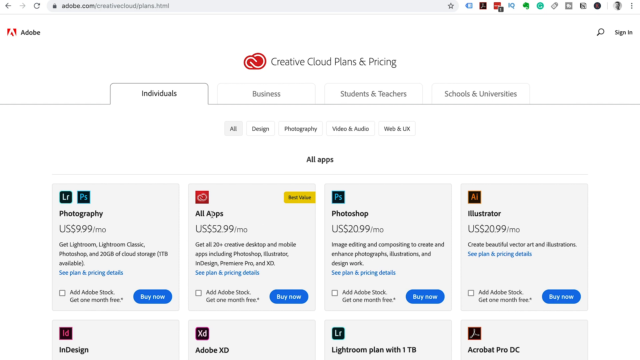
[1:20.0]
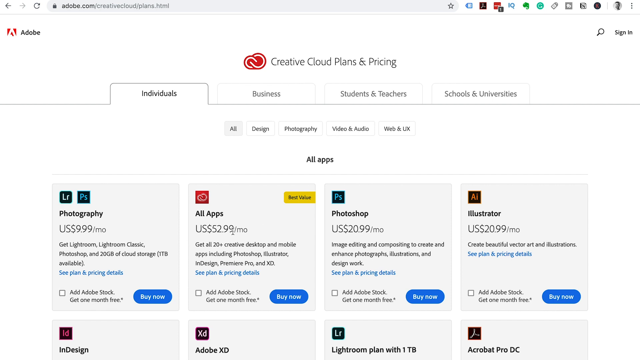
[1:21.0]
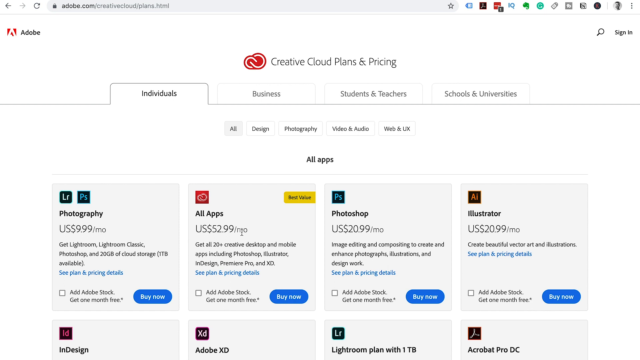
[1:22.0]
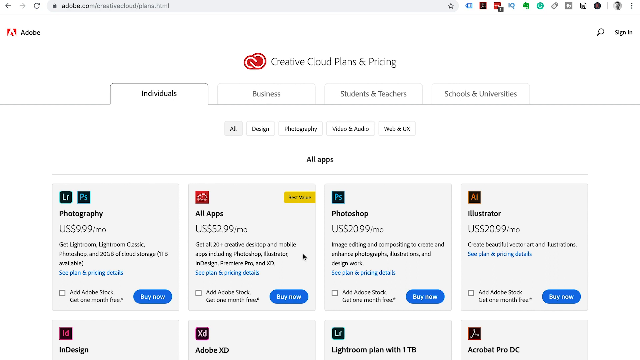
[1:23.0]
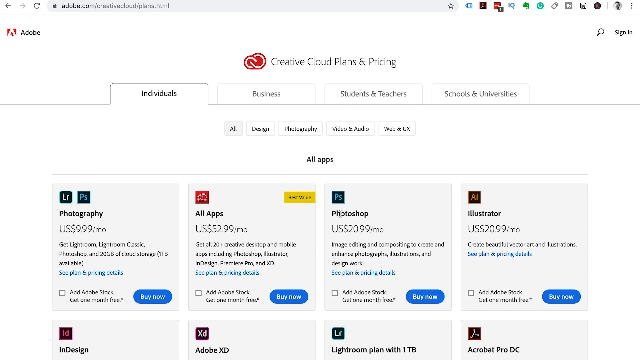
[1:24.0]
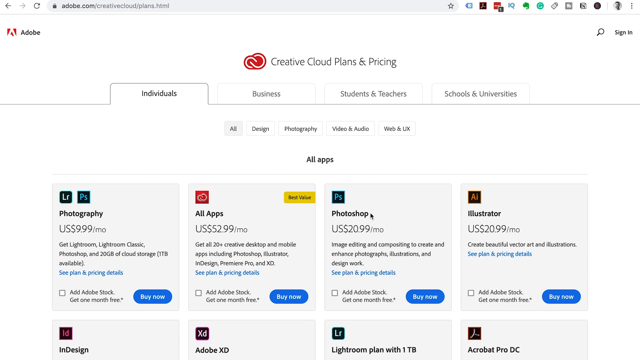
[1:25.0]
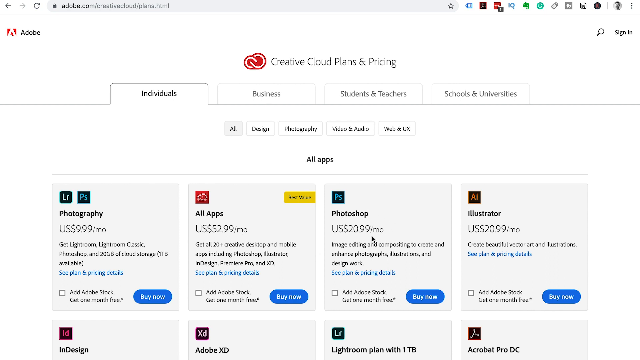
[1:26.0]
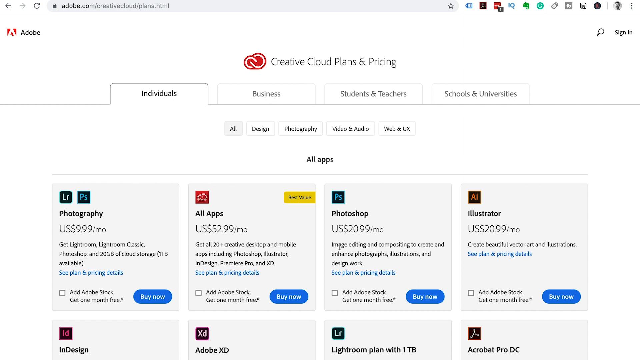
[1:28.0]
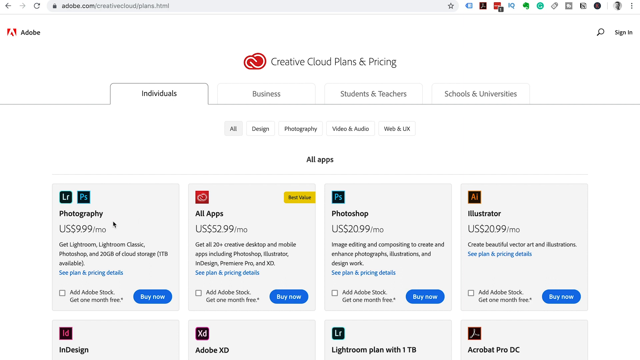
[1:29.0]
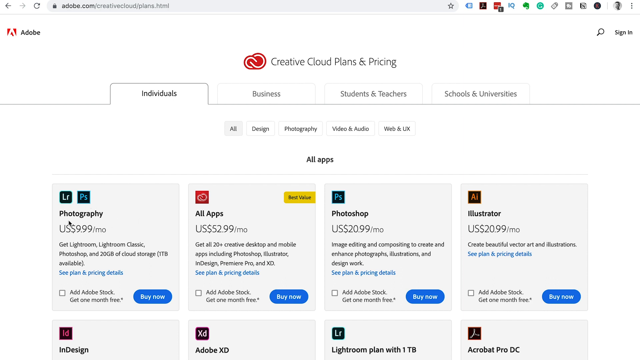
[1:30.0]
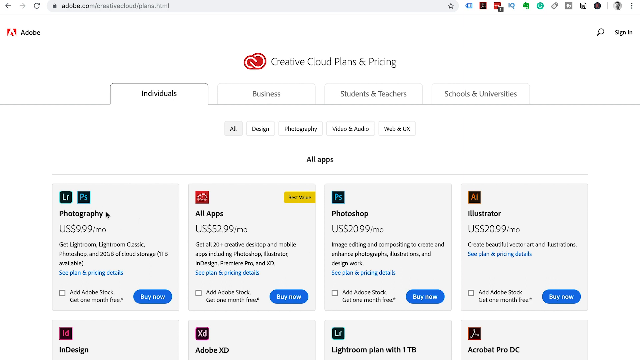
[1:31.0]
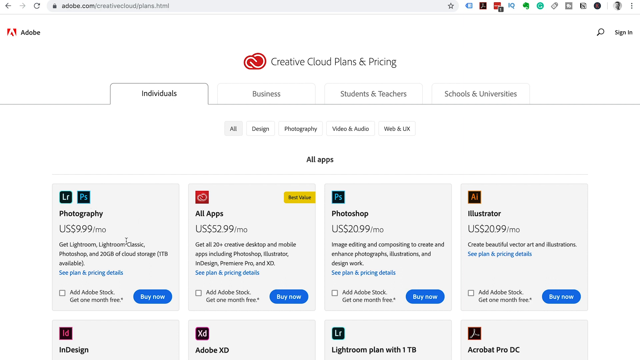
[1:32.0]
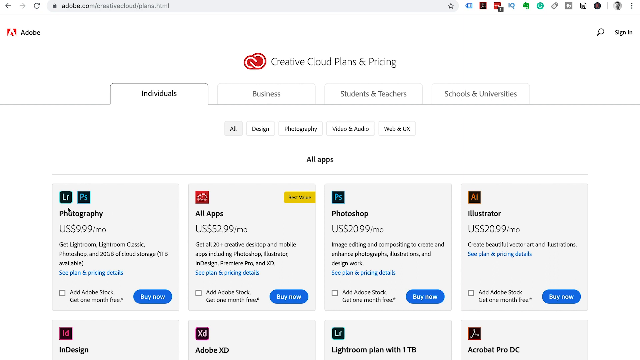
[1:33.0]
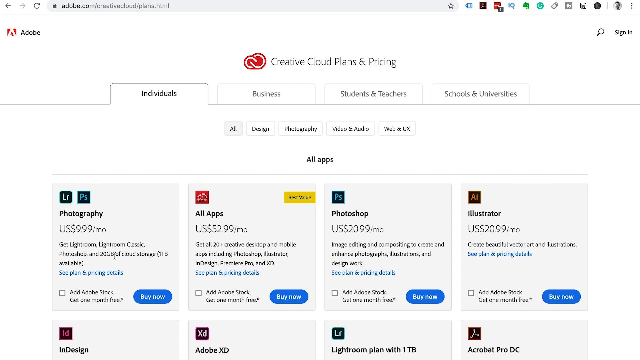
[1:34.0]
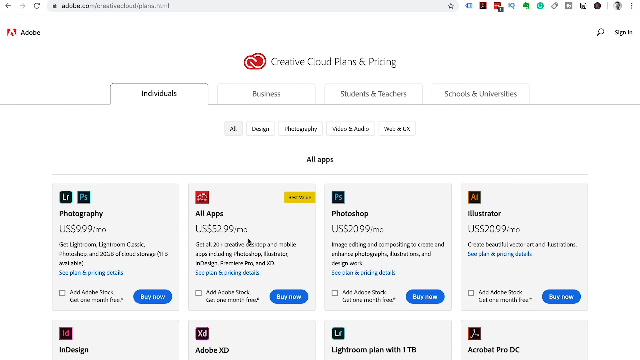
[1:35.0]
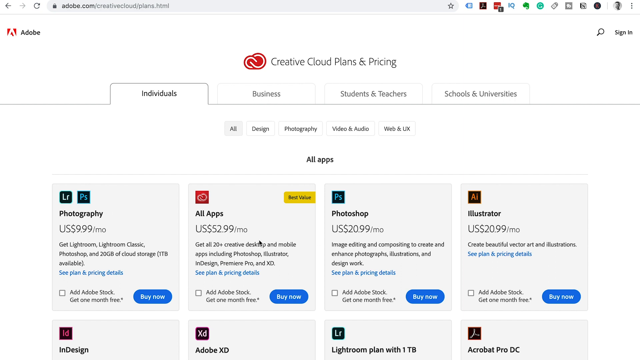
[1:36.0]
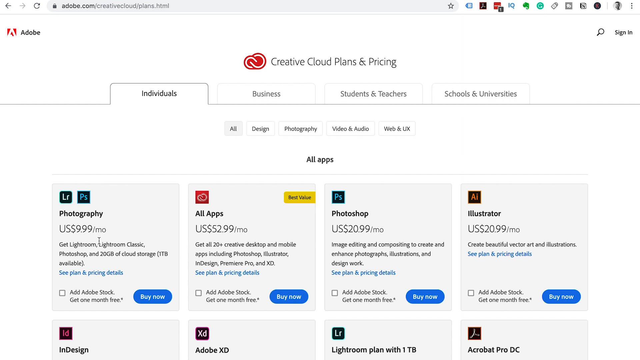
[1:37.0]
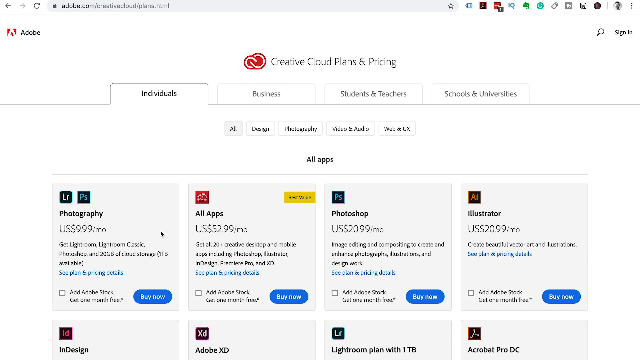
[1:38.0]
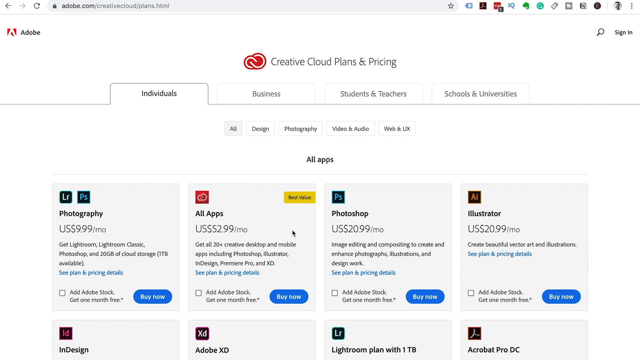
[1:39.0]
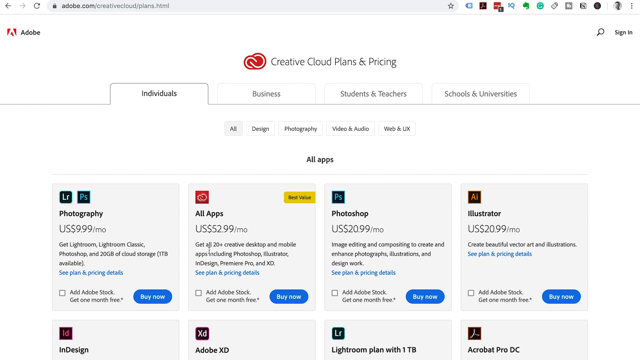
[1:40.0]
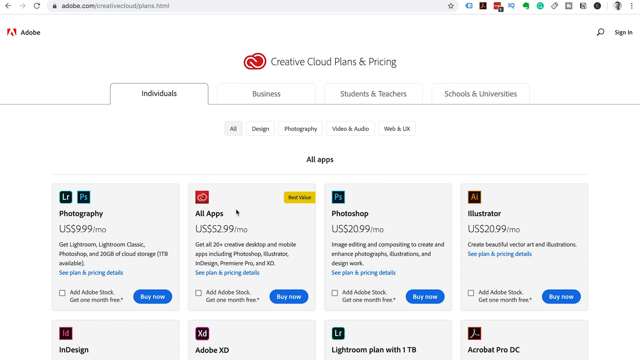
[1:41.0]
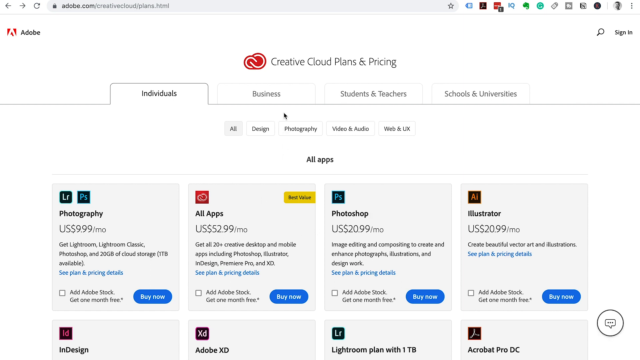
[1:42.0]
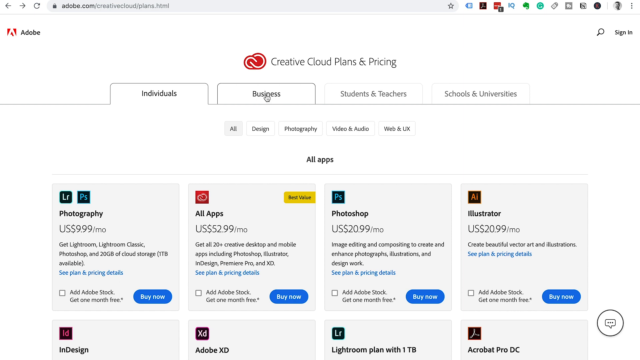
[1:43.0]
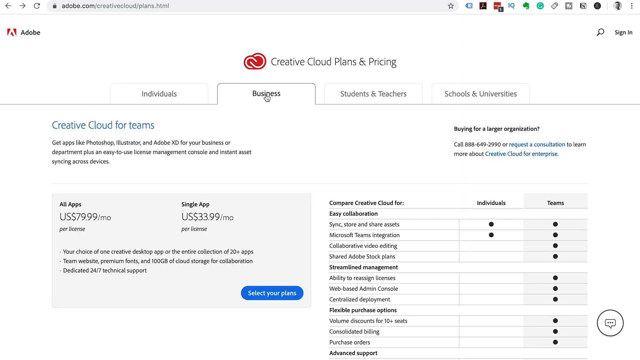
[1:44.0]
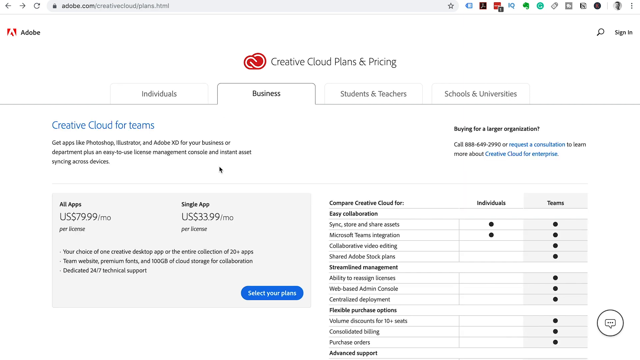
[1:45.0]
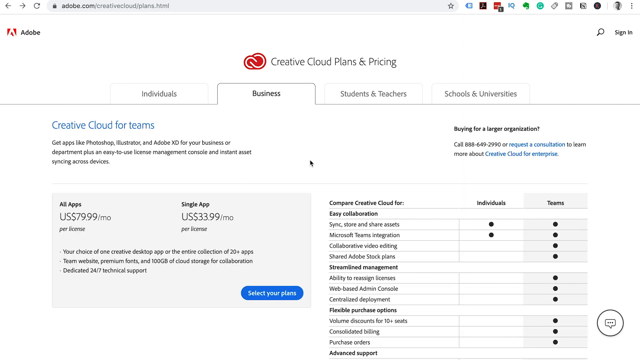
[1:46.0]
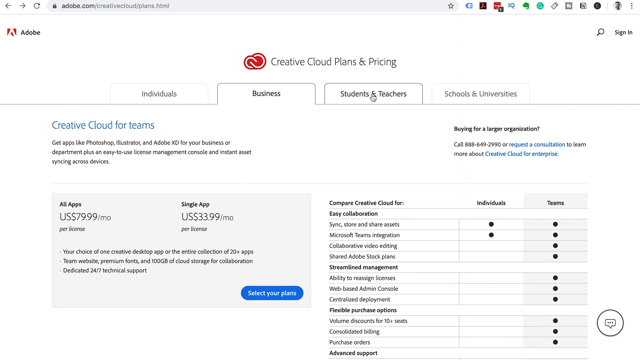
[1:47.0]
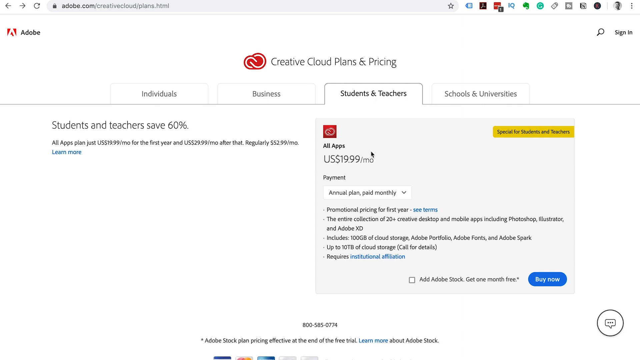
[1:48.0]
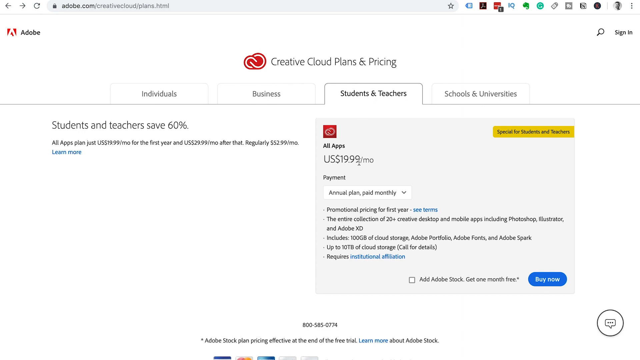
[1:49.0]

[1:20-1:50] They move on to the Photoshop area and circle it; it is described as image editing and composing to create enhanced photographs, illustration and design work. They go back to the $9.99 photography option, seemingly comparing the first and third items, then go back to the second item and press the business tab. What pops up shows the all apps option for businesses at $79.99 a month and a single app at $33.99 a month per license; the all apps price is also per license. A plan can be selected there, and to the right is a sort of checklist comparing Creative Cloud for individuals and teams. Next they click the tab for students and teachers, which shows all apps for $19.99 a month on the annual plan. A yellow rectangle at the top marks it as special for students and teachers.